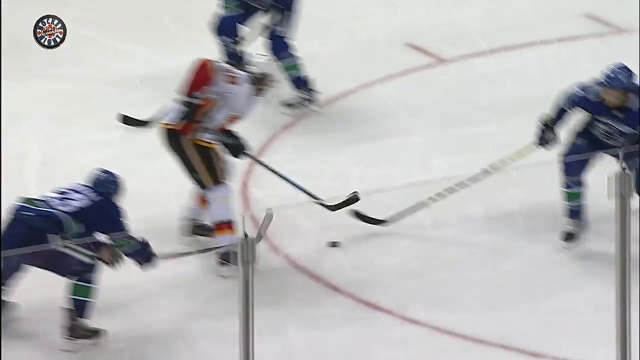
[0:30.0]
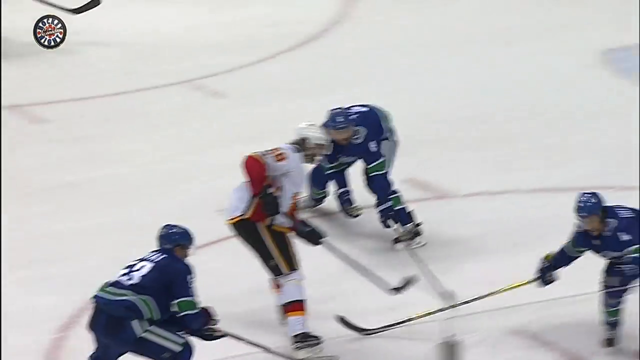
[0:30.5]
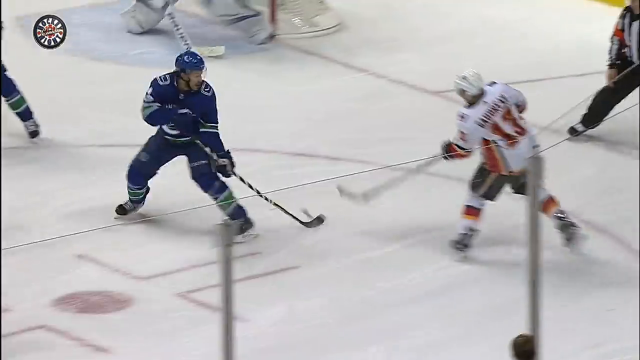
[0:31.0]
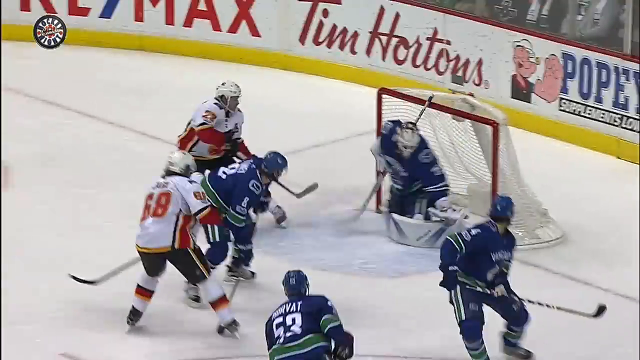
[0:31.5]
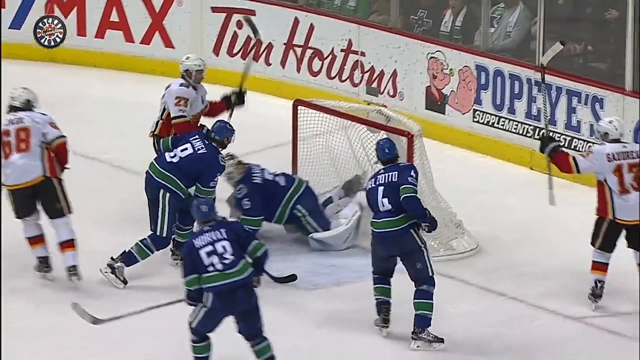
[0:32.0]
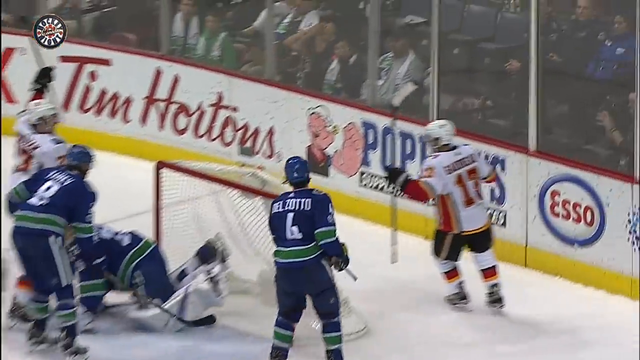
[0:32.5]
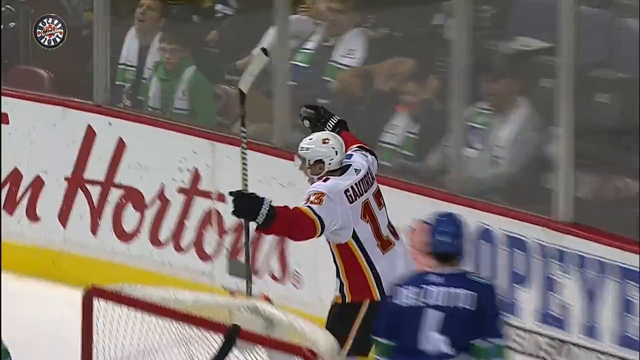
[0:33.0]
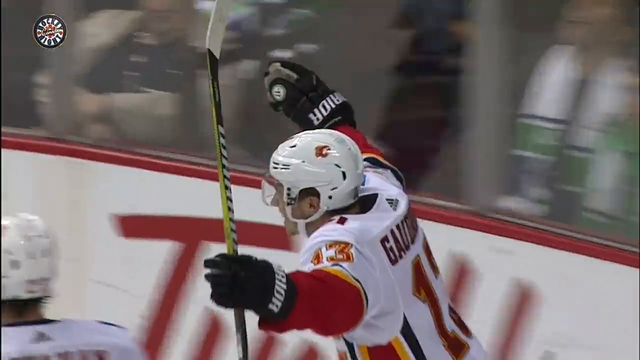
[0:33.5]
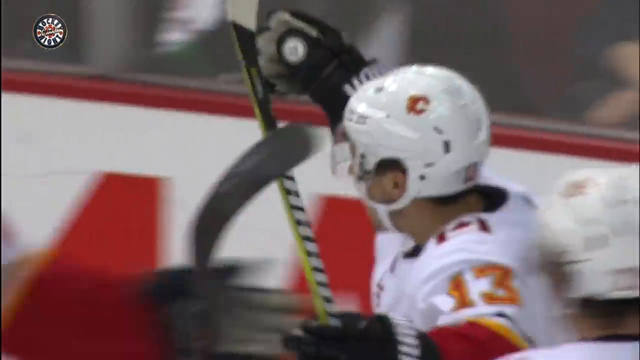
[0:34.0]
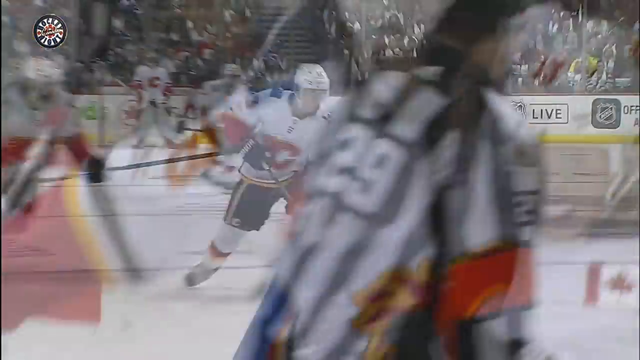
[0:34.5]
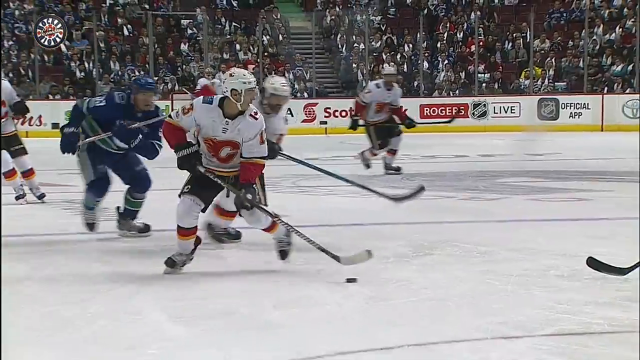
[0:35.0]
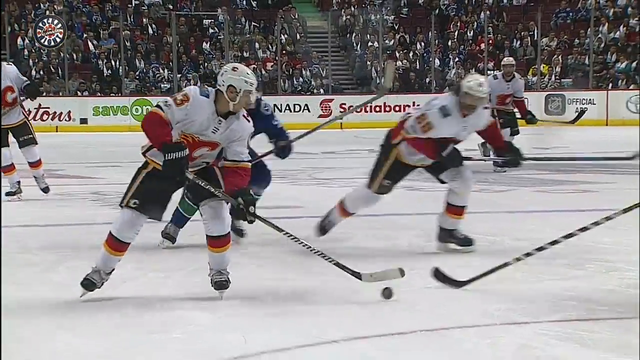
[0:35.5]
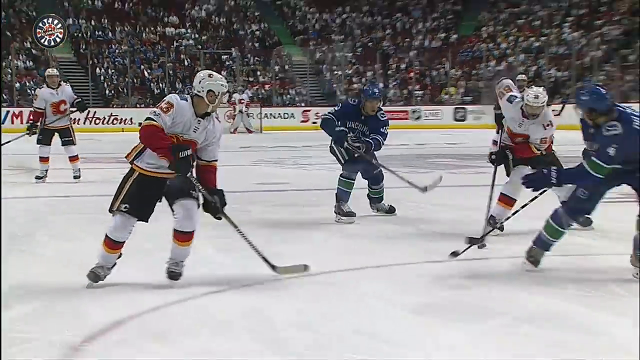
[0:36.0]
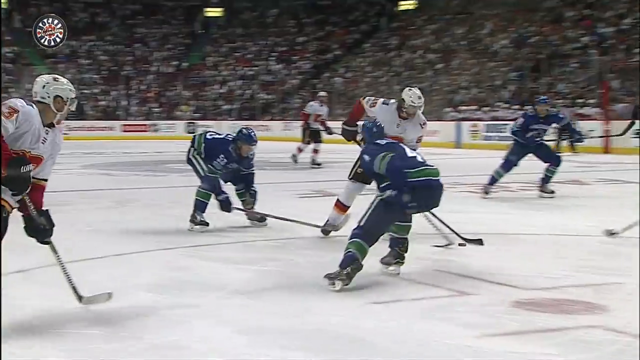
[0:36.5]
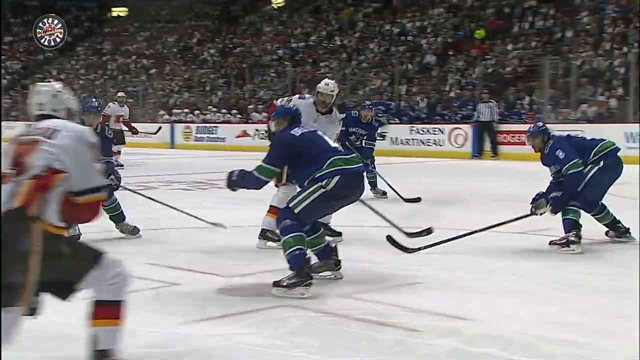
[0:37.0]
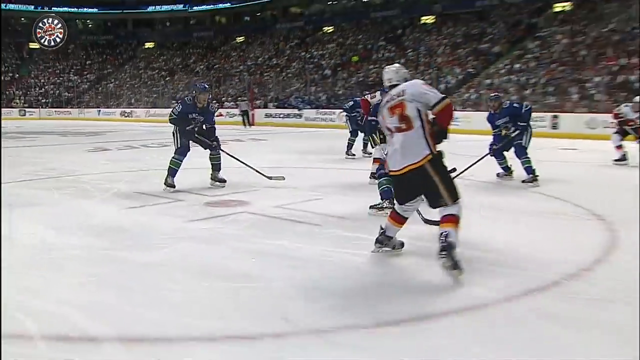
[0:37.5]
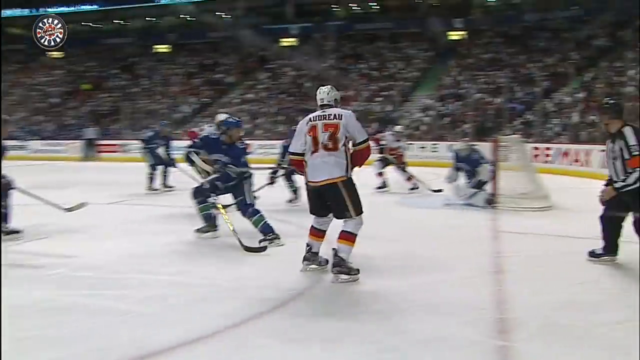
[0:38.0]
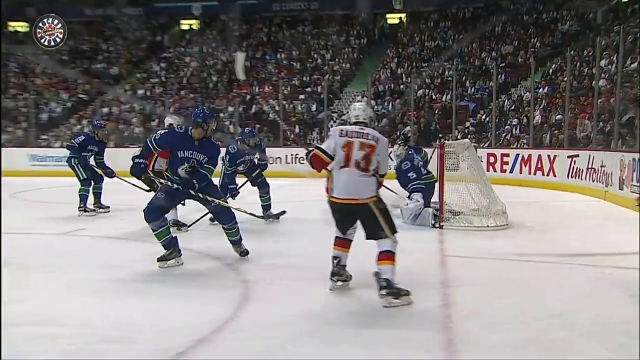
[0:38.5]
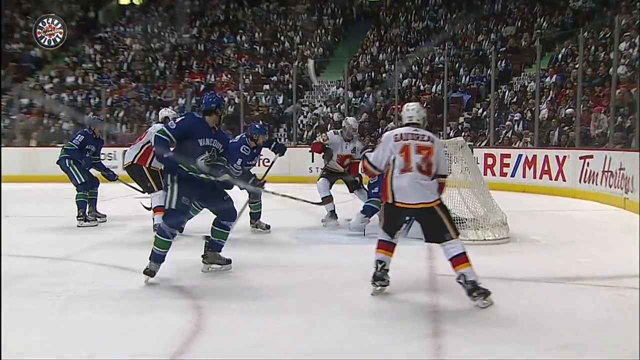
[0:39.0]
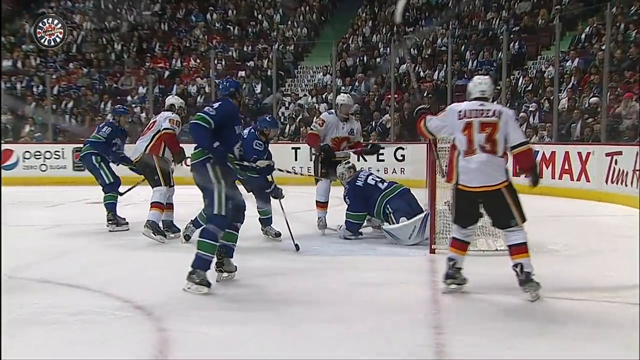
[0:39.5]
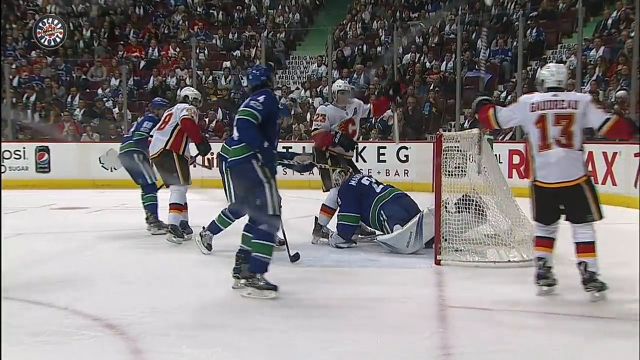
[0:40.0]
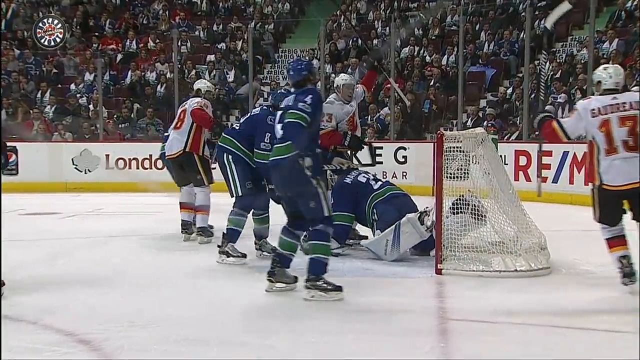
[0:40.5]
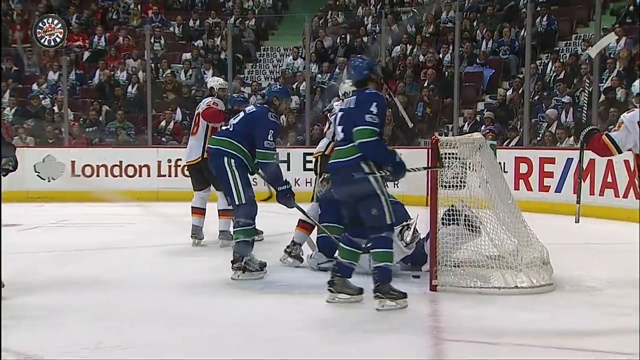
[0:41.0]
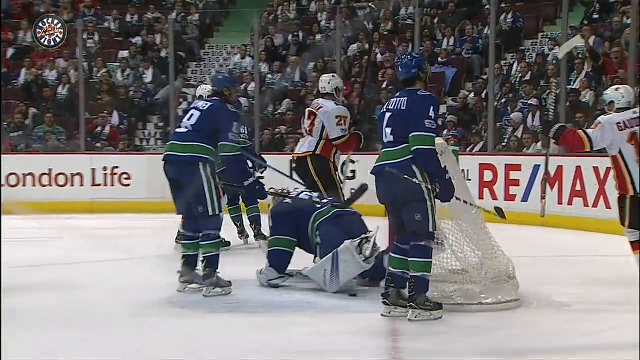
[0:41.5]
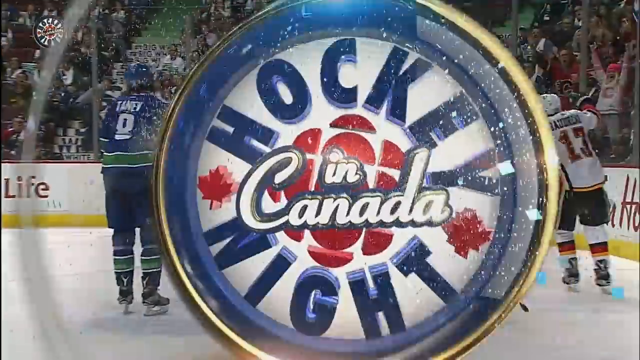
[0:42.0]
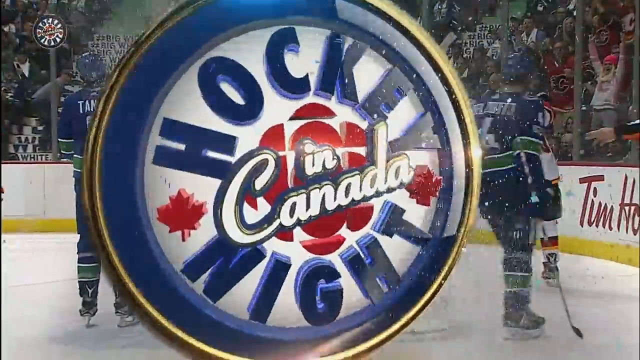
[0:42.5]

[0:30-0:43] A close-up shows Calgary in white jerseys with red trim playing Vancouver in blue jerseys with green trim, just after Calgary has scored a goal. There is a close-up of the passing play in a replay, and the Hockey Night in Canada logo flashes on the screen. The game is being played on ice at Rogers Arena in Vancouver, Canada. A close-up shows the Calgary players in white celebrating, including number 13, Johnny Goudreau, who assisted on the play, smiling. The Vancouver goalie is flat on the ice after letting the puck get by him. Another close-up shows the two teams playing: Calgary in white with red trim and Vancouver in blue with green and white trim.